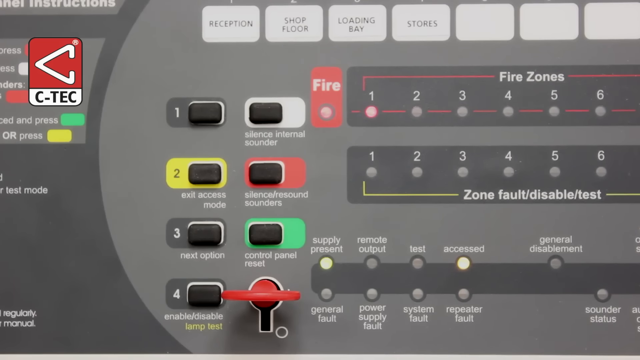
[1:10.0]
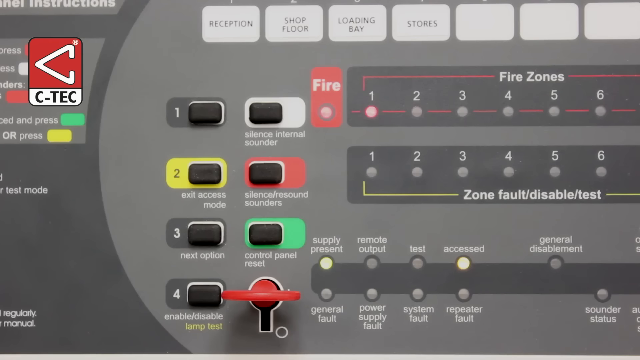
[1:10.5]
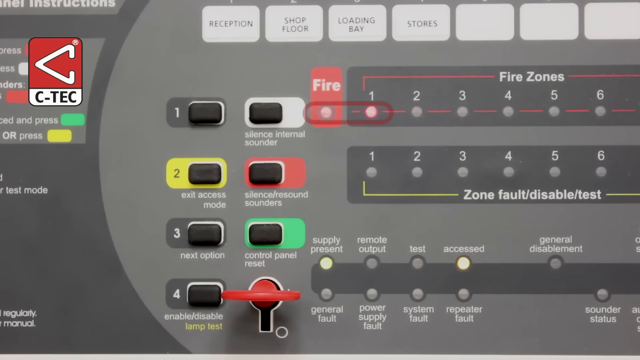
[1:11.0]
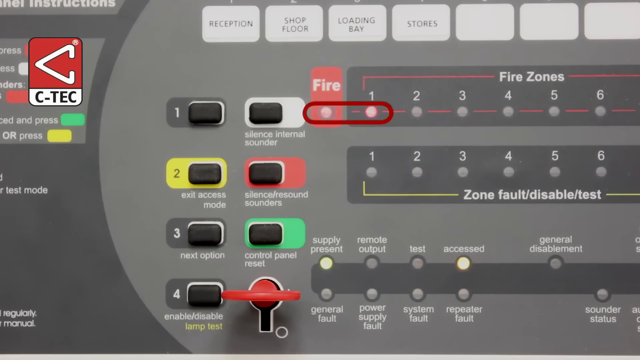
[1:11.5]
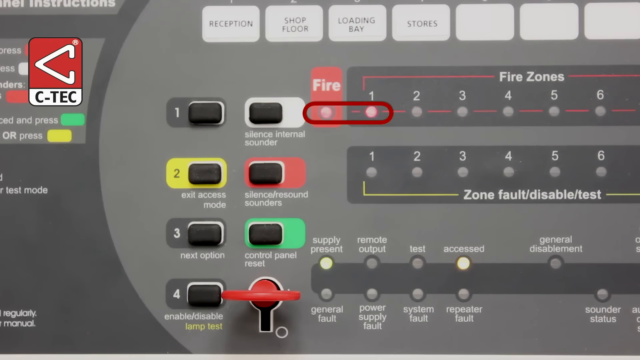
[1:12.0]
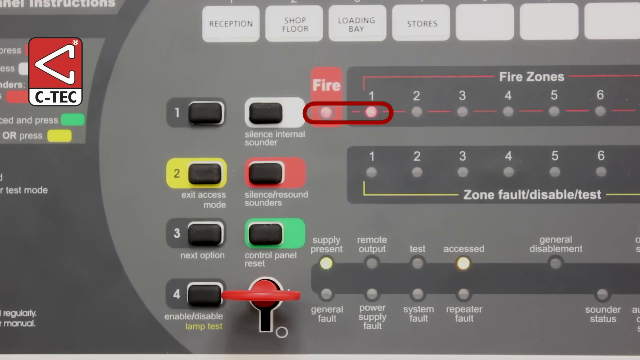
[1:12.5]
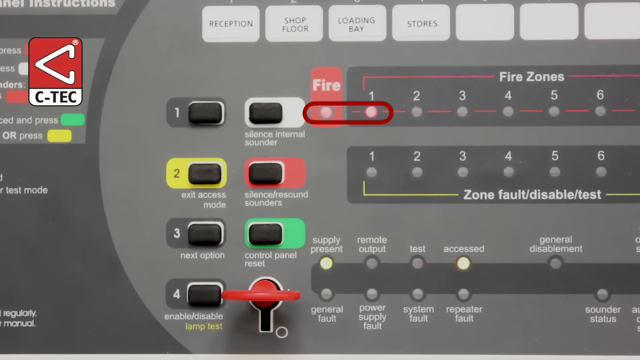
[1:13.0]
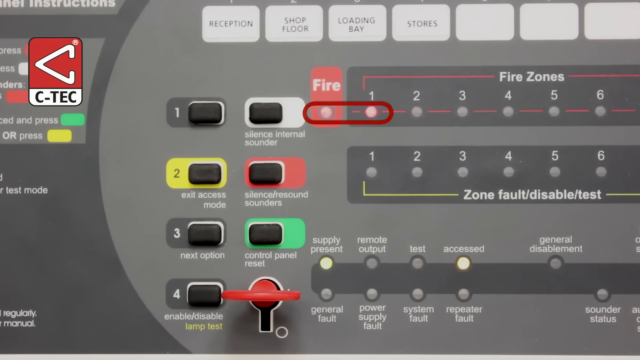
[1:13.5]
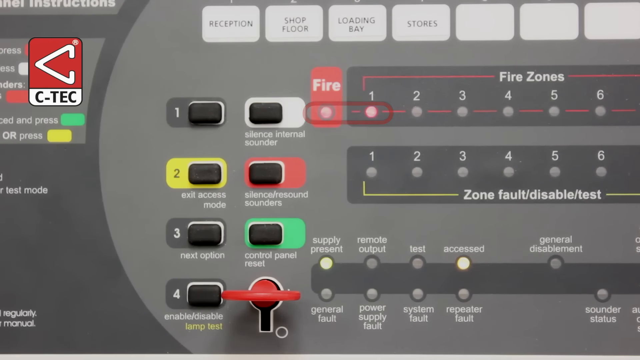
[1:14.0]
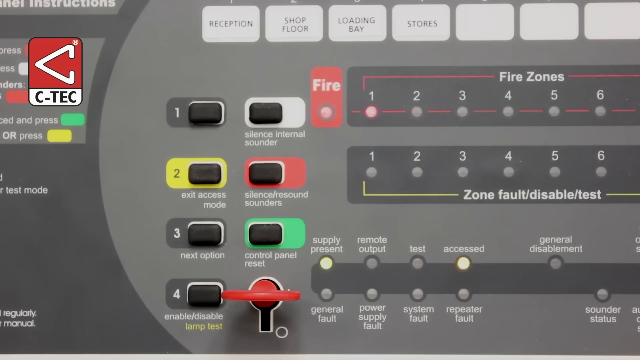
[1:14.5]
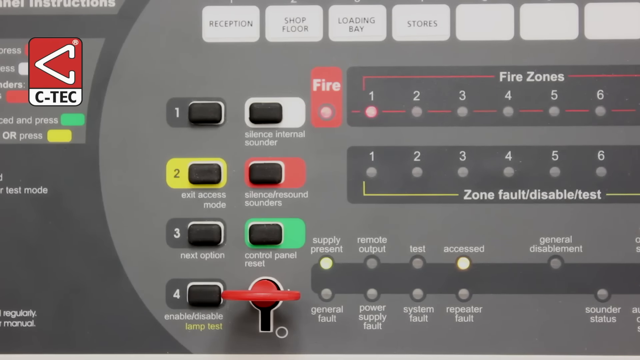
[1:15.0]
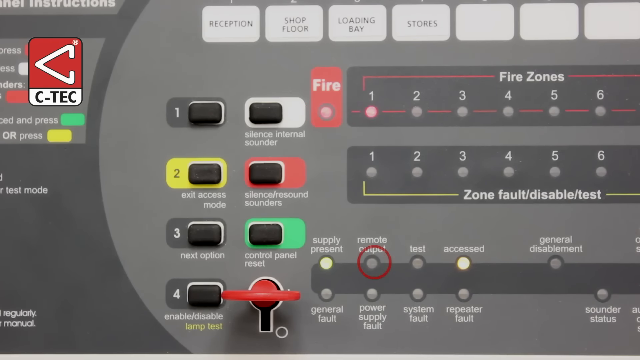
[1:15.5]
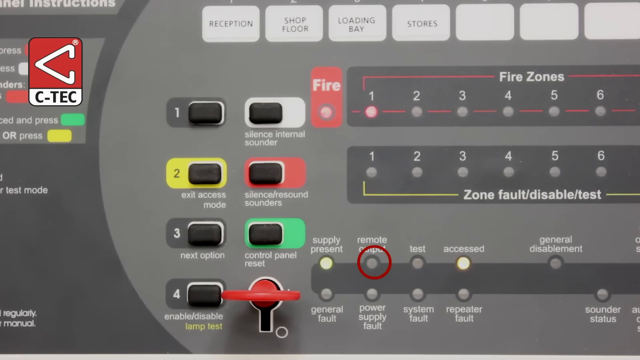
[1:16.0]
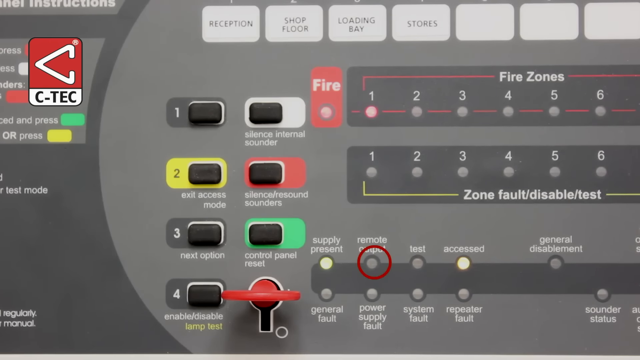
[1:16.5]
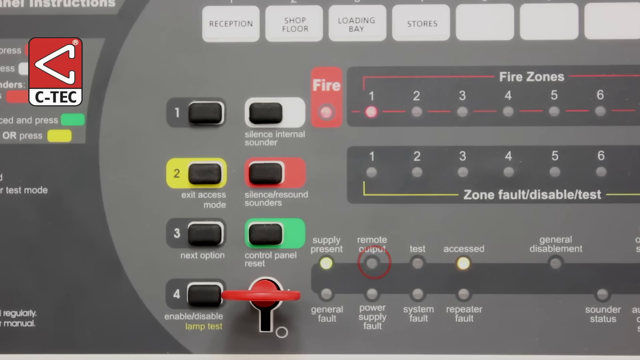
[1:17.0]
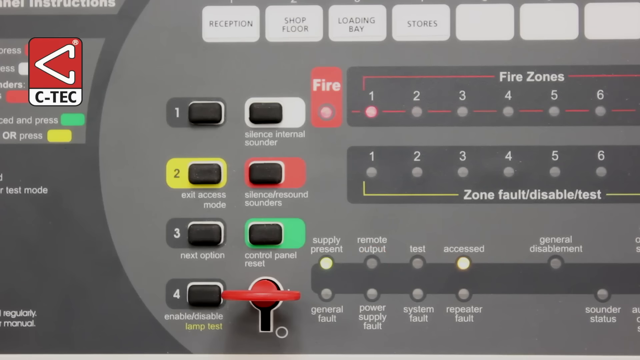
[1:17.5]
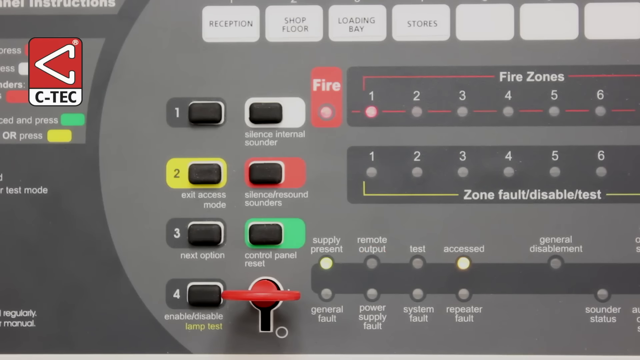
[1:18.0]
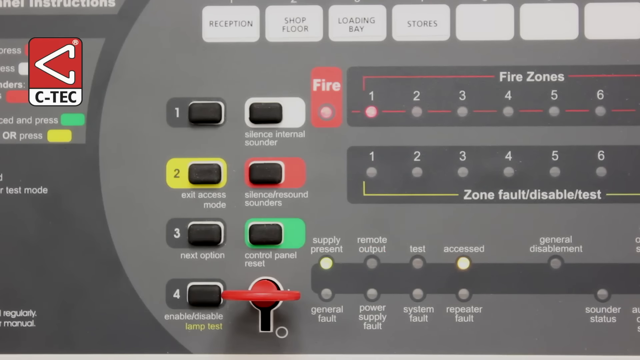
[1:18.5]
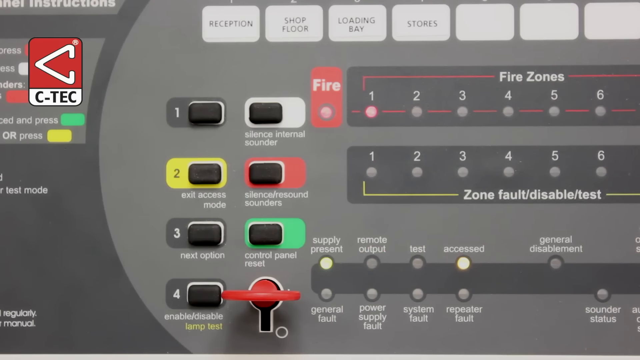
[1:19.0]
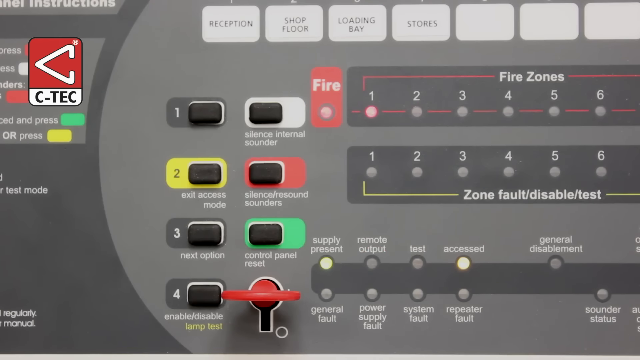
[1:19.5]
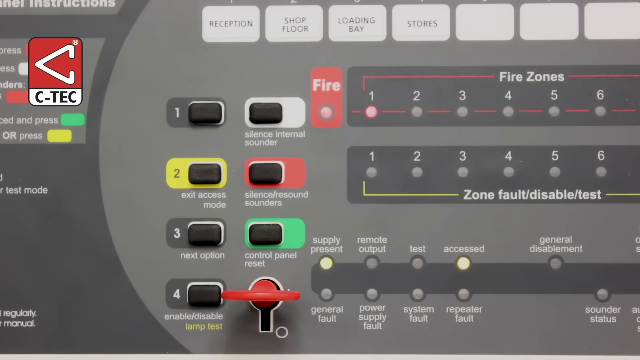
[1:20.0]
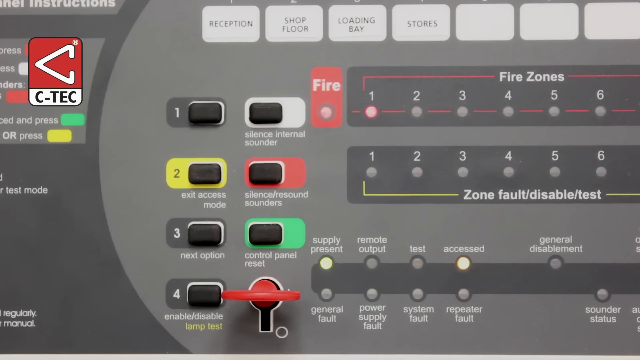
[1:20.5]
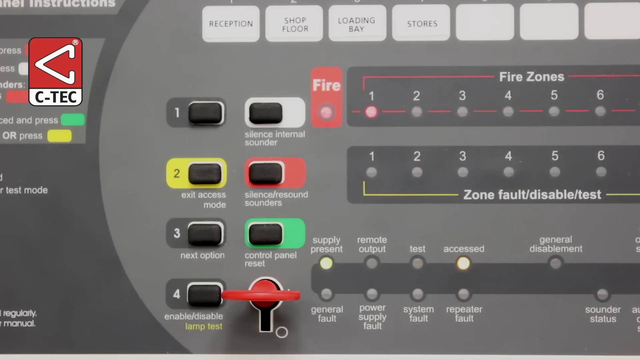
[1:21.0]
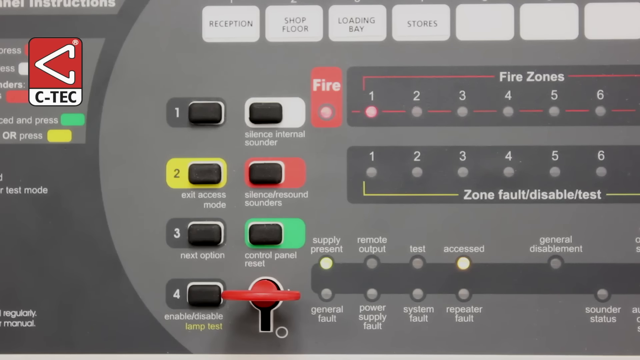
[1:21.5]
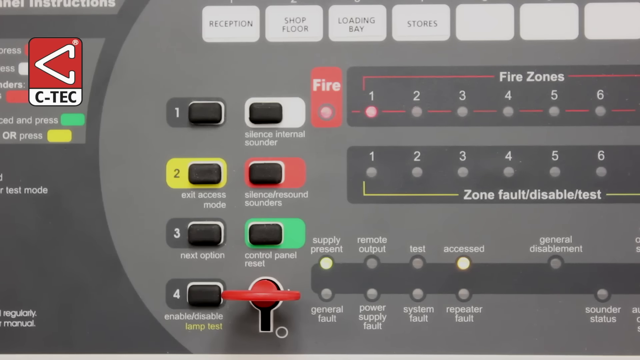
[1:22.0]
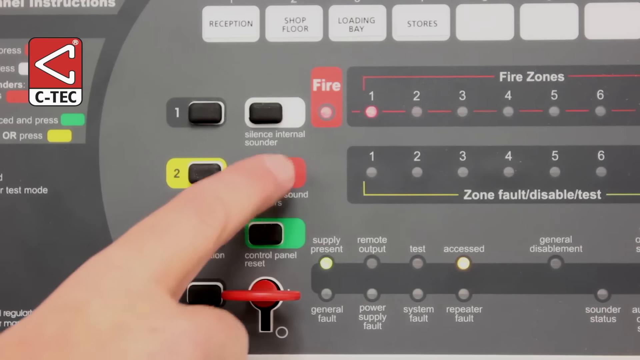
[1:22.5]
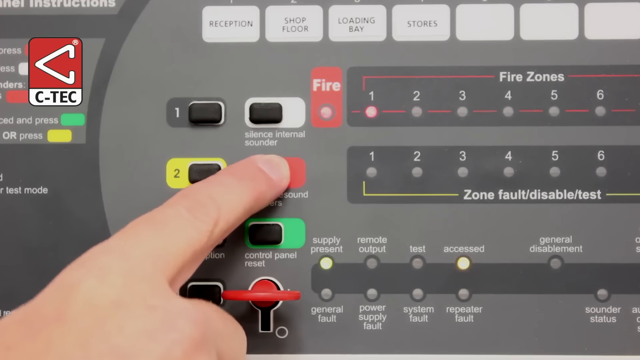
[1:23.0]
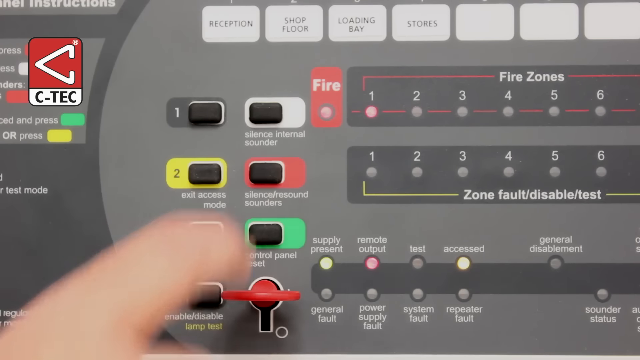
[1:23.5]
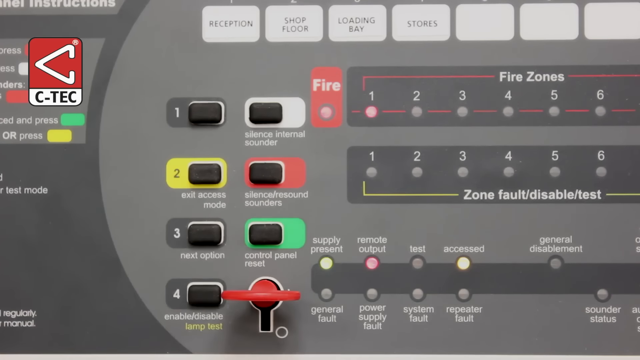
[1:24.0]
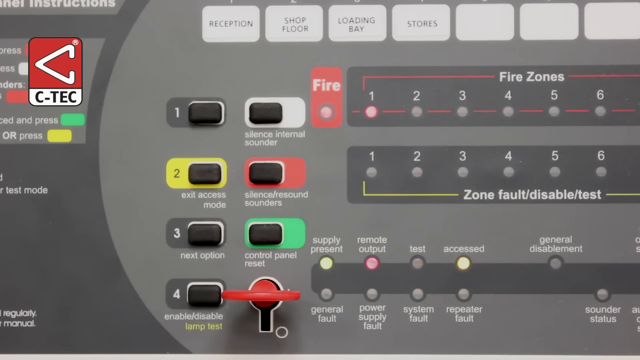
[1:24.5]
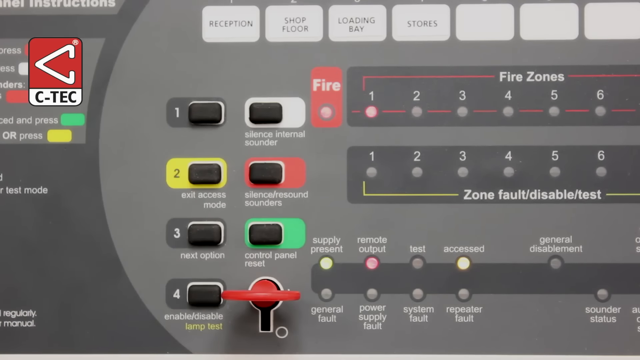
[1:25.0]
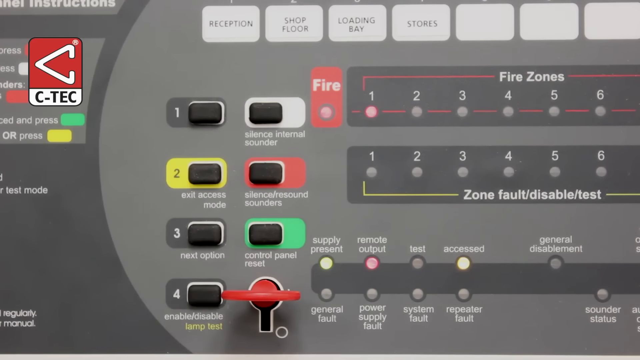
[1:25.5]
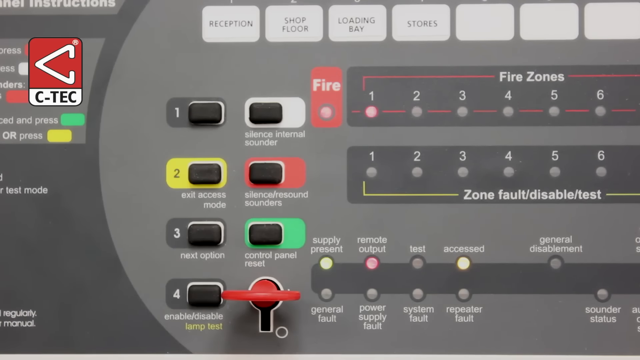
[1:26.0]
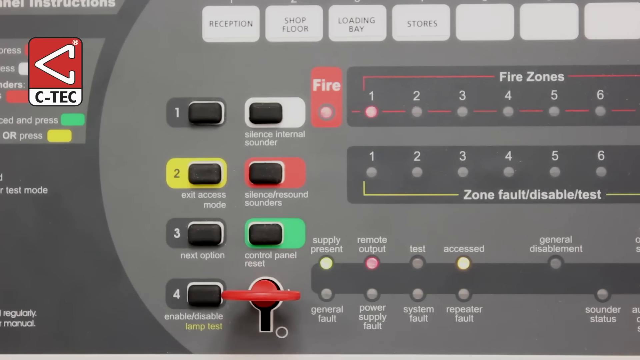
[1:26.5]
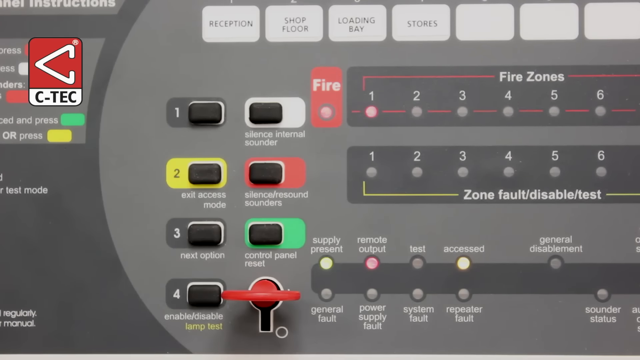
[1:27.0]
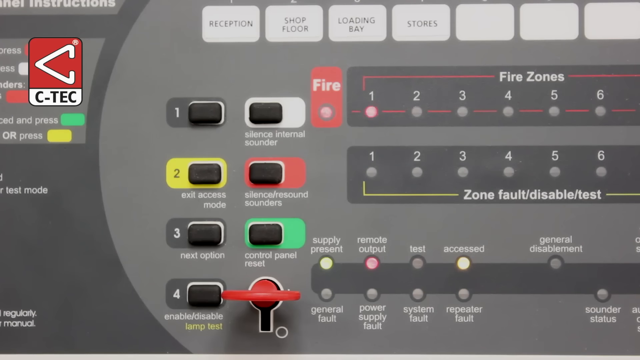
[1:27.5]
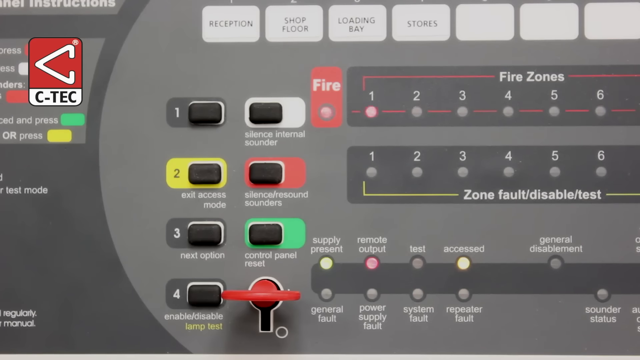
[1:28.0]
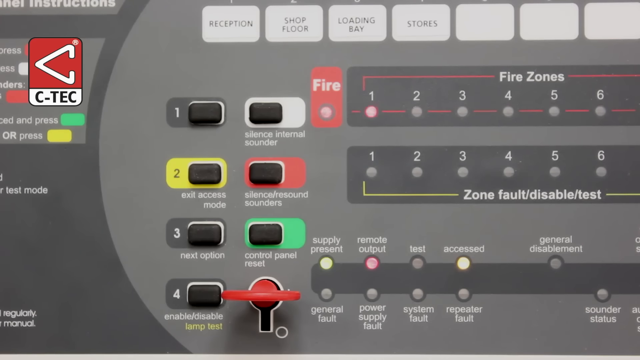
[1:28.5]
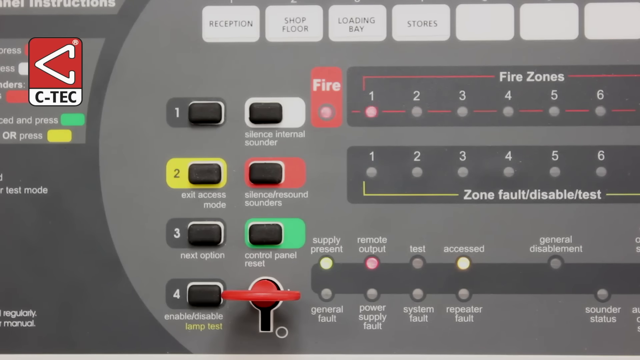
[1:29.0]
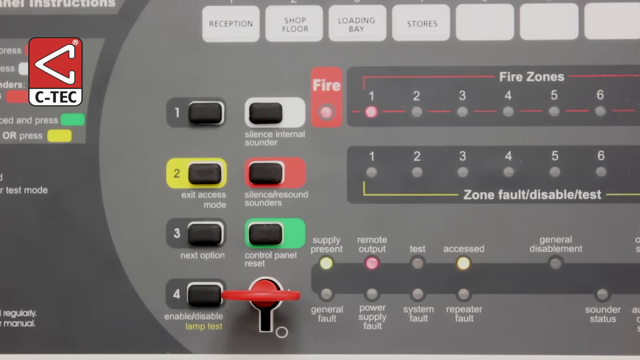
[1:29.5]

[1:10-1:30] A red box highlights the two red lights at the top, one under the fire section, which has a red background, and the other below the one under the fire zones. The lights stop flashing and stay a solid red. At the bottom, the supply present and accessed lights remain green and yellow. The red outline added to the video then moves from around the fire options to around the remote output section, showing that it has gone from red to no colour. The man presses silence resound sounders again, and the fire and fire zone one lights start flashing red again, while the red light reappears under the remote output option at the bottom of the screen. The video stays slightly zoomed in so the different options on the control panel can be clearly made out.